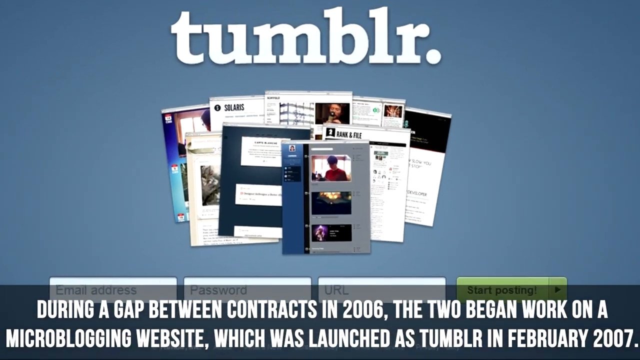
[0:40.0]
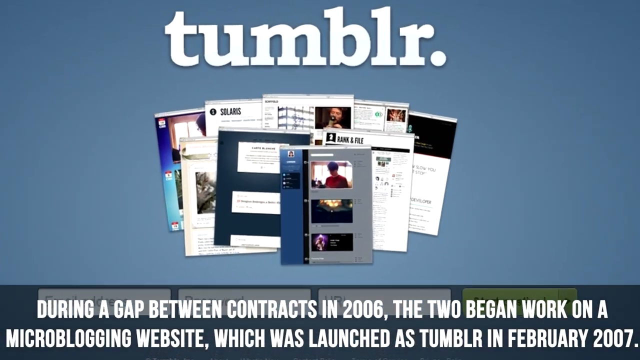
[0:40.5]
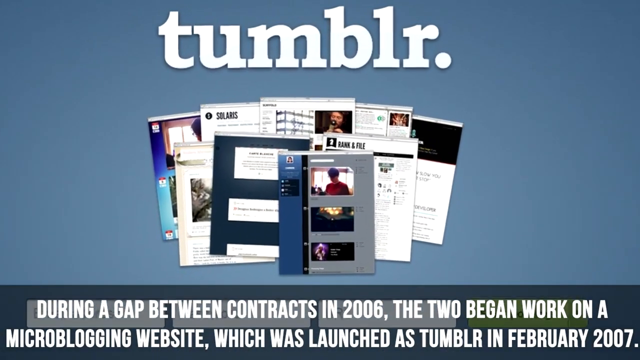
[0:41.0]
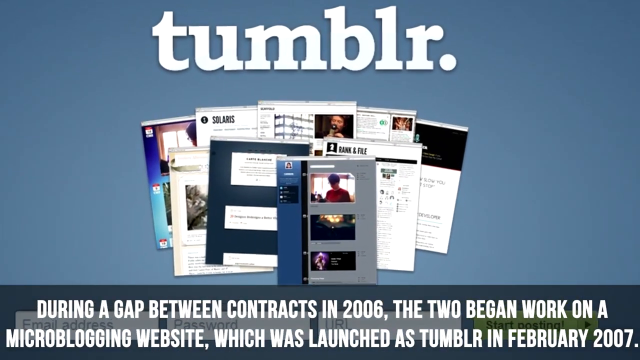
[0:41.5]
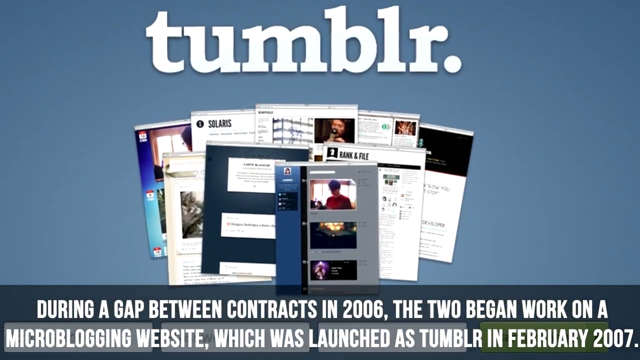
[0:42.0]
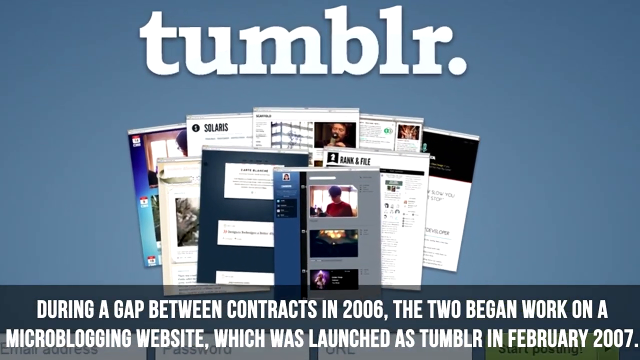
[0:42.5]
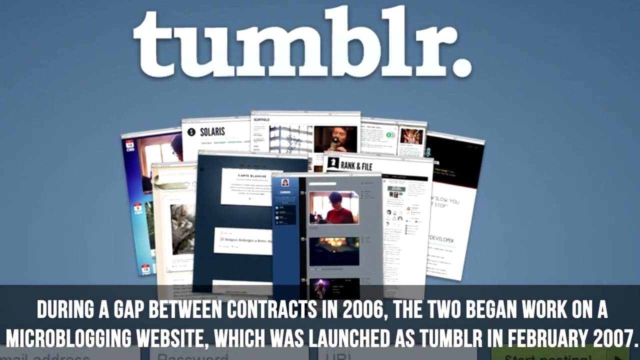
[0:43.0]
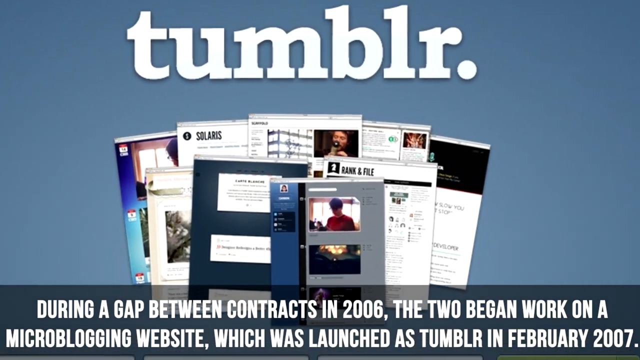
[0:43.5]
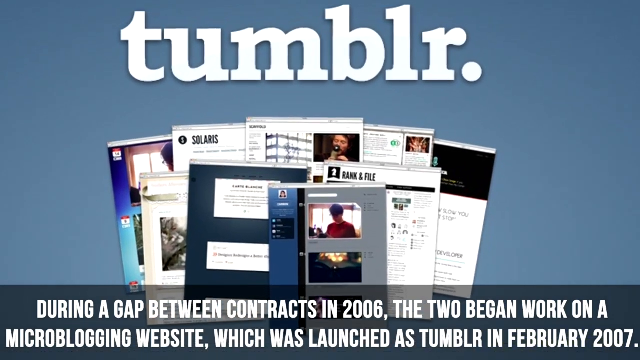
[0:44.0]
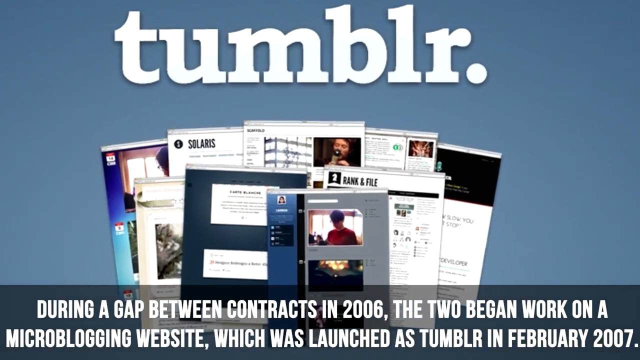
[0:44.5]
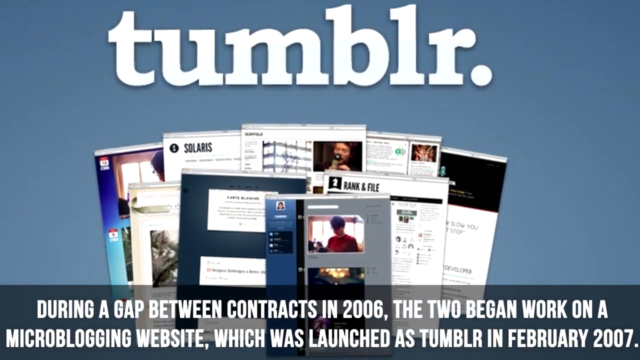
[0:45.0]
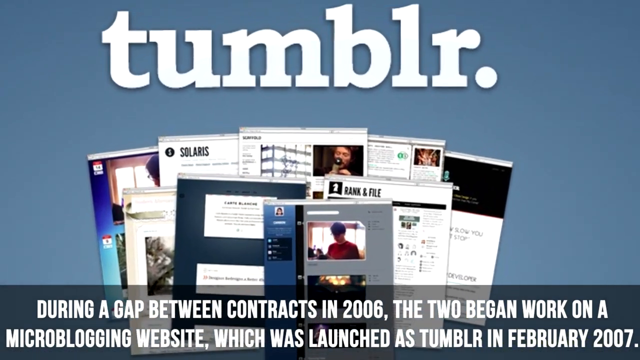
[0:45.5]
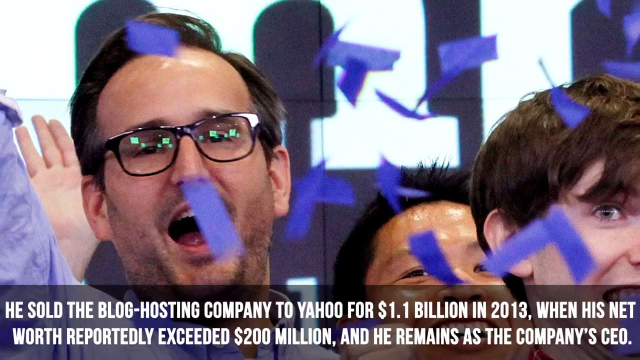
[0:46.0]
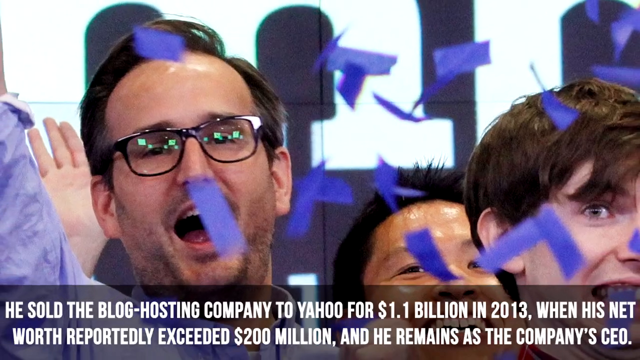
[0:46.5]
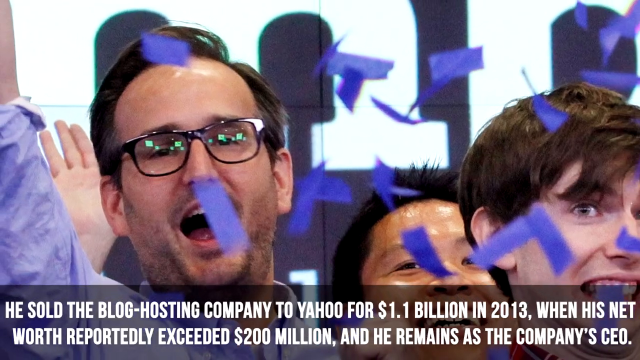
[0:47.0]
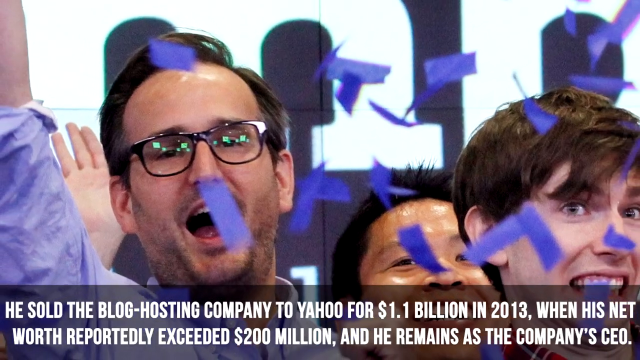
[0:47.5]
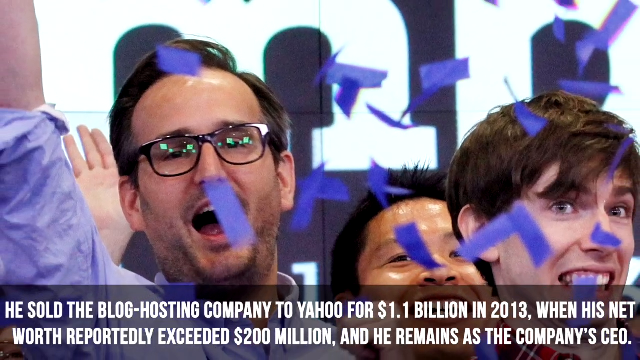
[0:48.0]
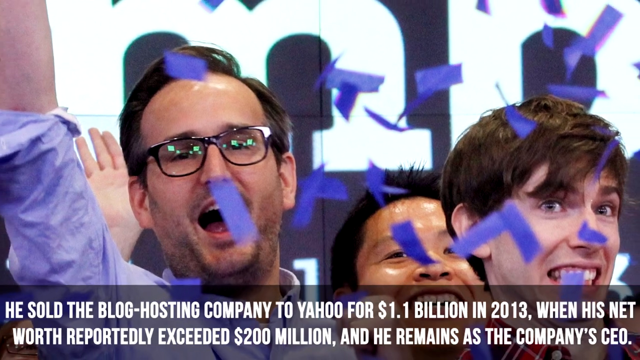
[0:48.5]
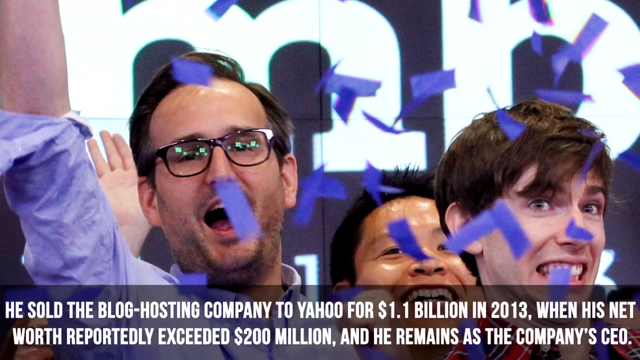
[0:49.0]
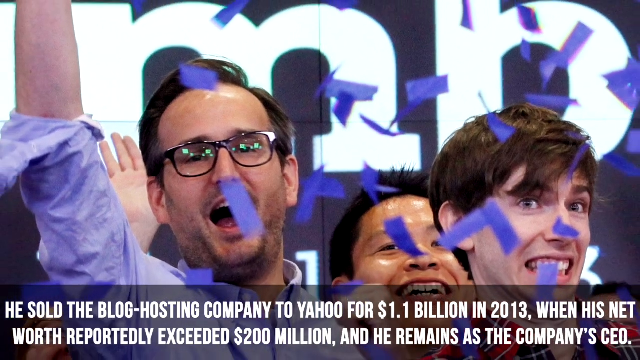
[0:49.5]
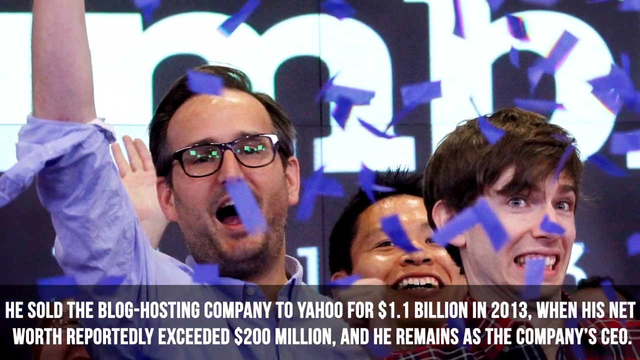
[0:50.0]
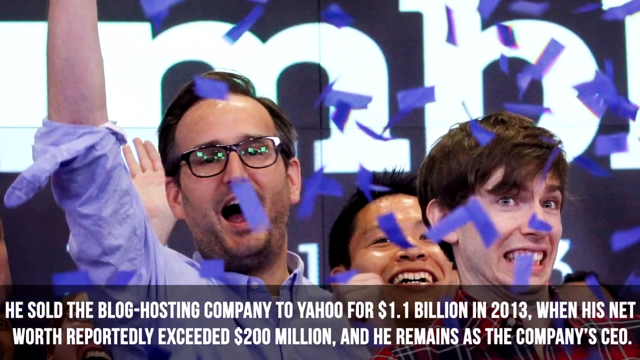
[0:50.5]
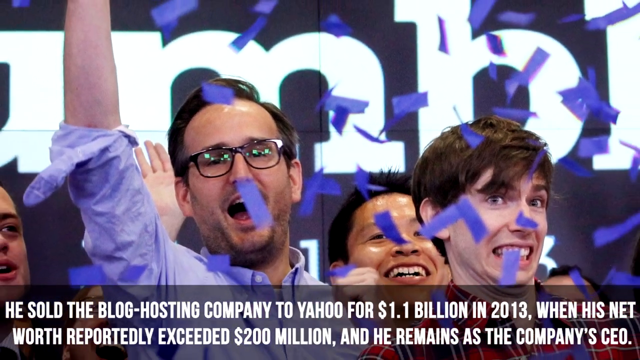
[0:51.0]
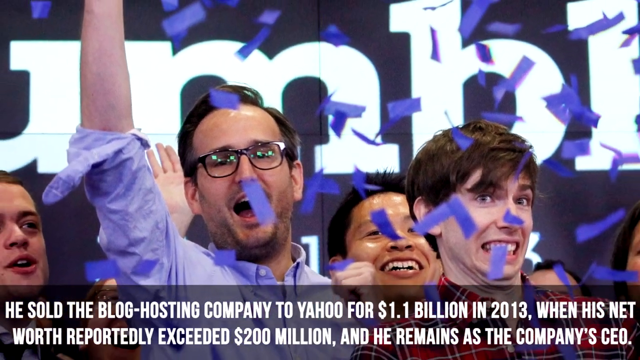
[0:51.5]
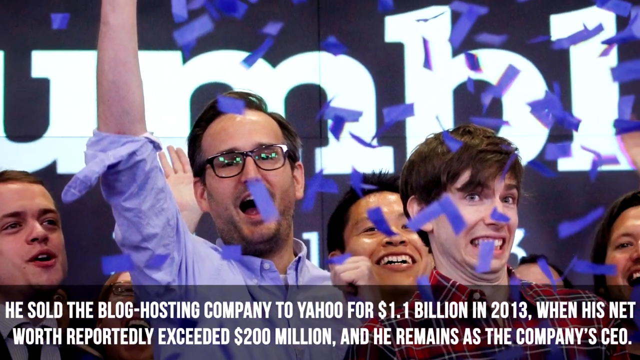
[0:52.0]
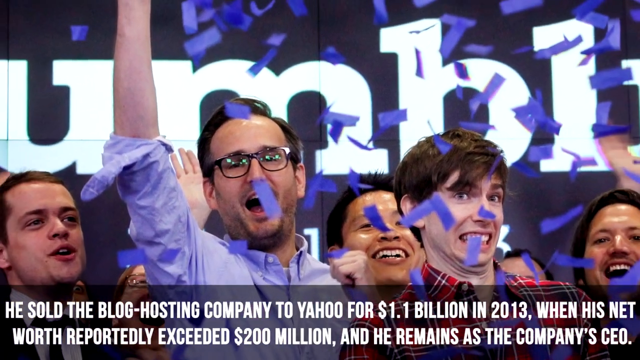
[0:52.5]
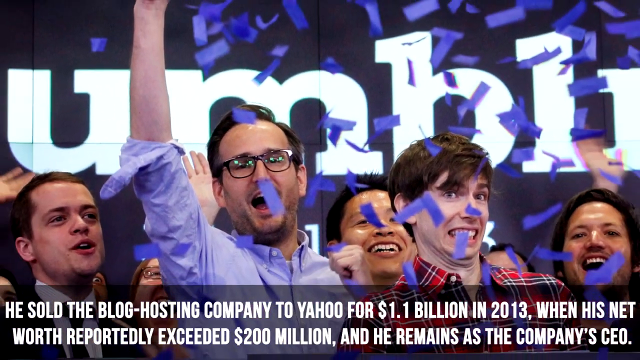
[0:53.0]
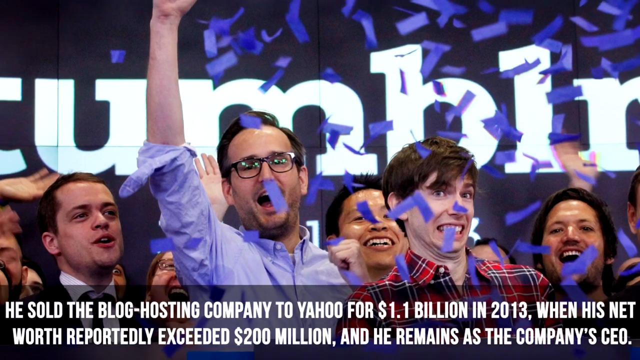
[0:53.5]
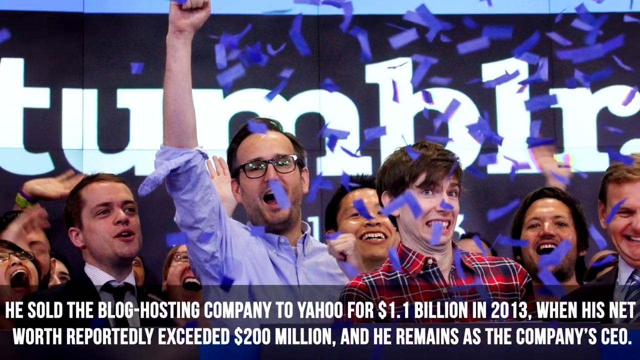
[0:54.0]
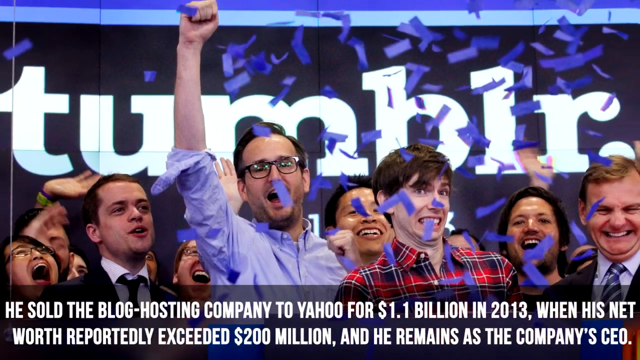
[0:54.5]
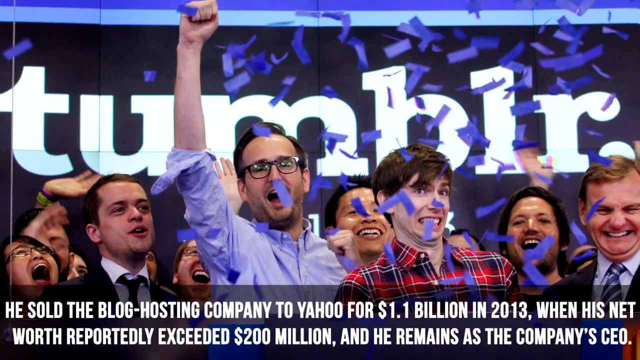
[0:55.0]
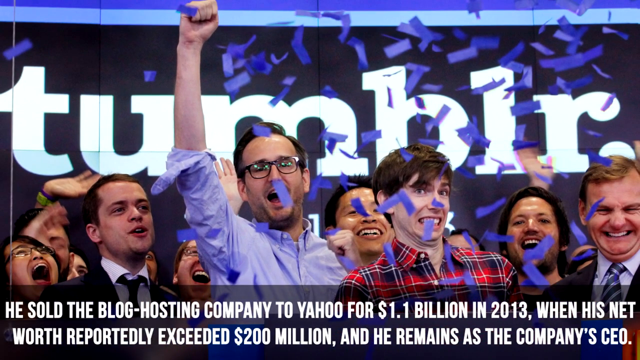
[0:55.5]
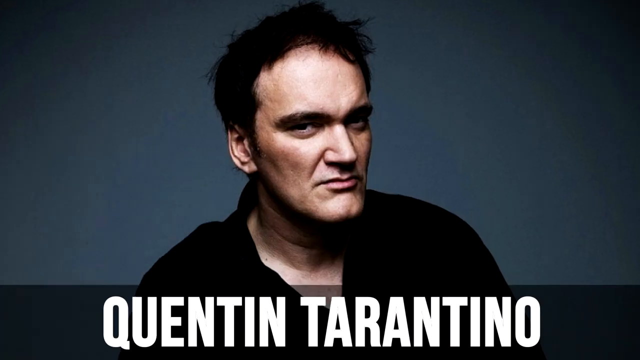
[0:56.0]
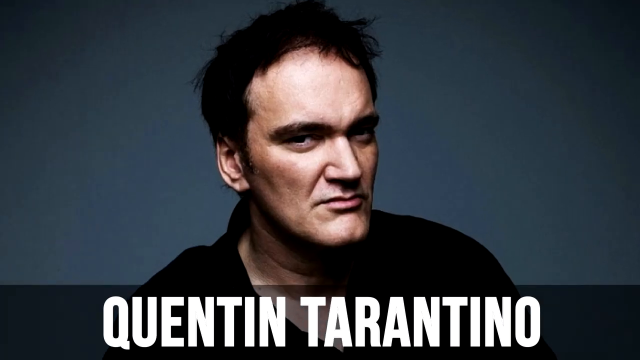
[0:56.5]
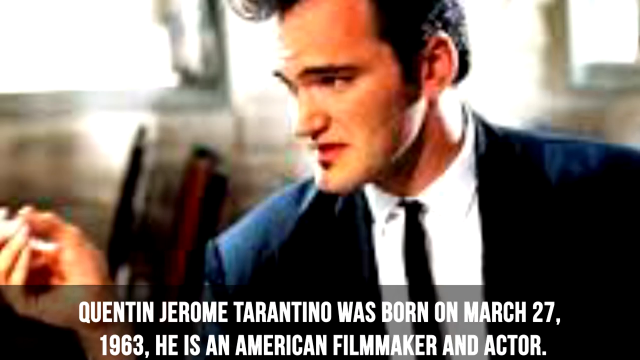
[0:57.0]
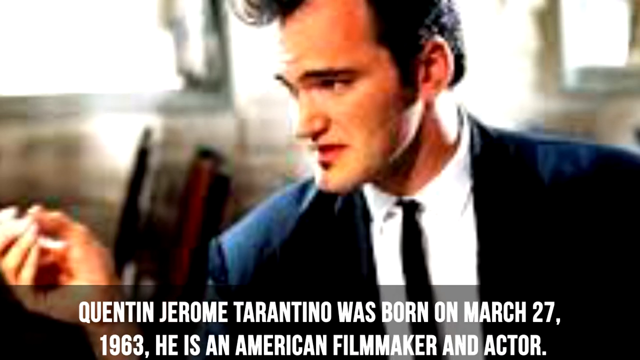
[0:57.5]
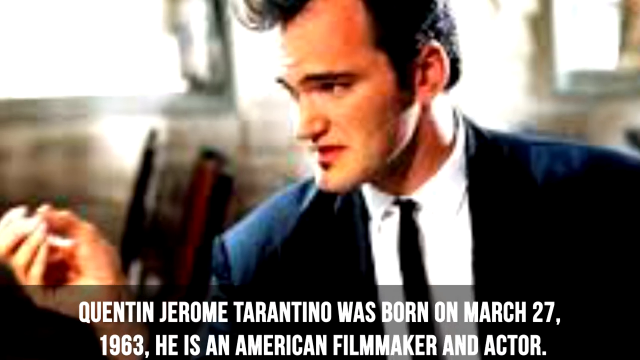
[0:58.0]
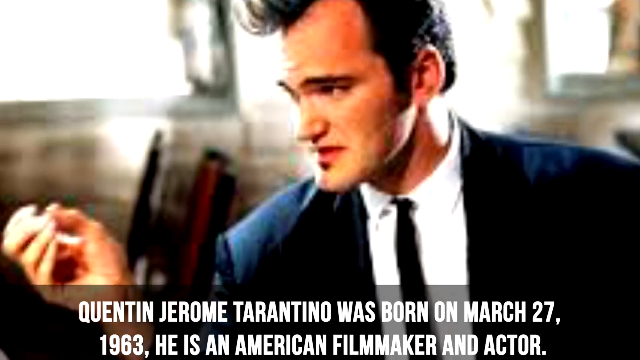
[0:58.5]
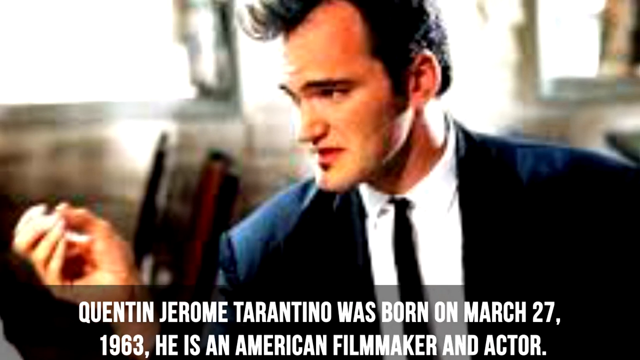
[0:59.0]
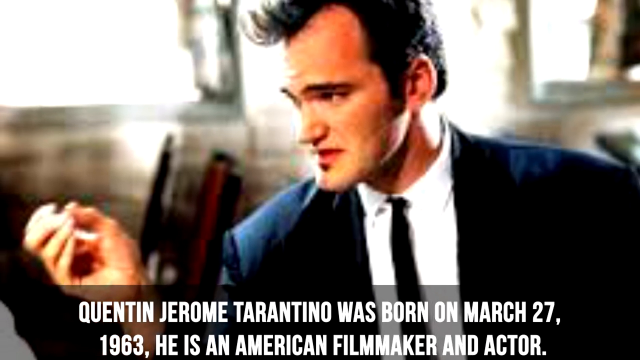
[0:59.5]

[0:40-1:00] On a bluish-purplish background, the Tumblr logo appears in bold white at the upper center, with some Tumblr pages and other pages underneath. Text at the bottom reads "During a gap between contracts in 2006, the two began work on a" website launched as Tumblr in February 2007, then says he sold the blog hosting company to Yahoo for $1.1 billion in 2013, when his net worth was reported at $200 million, and that he remained the company's CEO. The video then cuts to a standard headshot of Quentin Tarantino, a man who appears white, with black hair, and the text reads "Quentin Tarantino was born March 27, 1963. He's an American filmmaker."